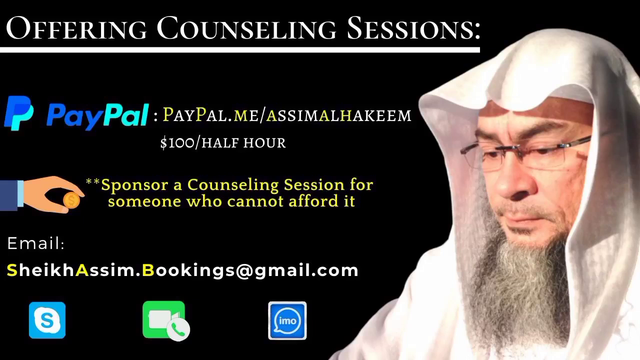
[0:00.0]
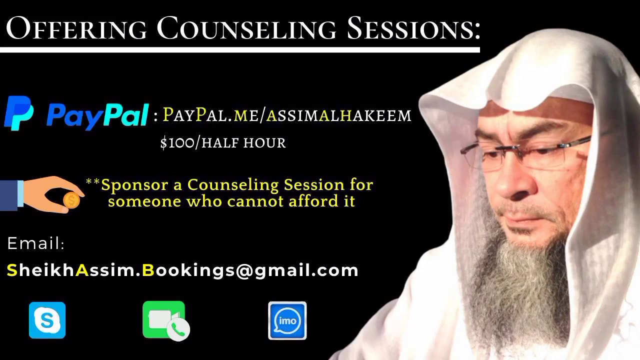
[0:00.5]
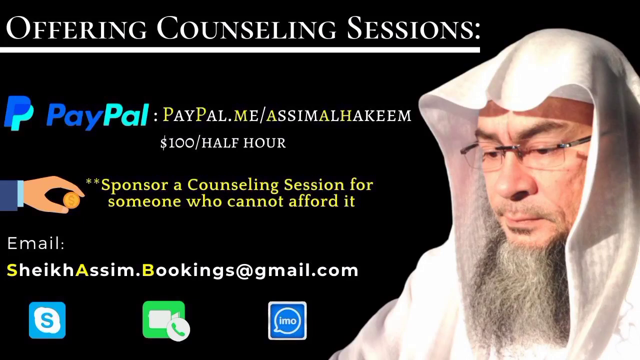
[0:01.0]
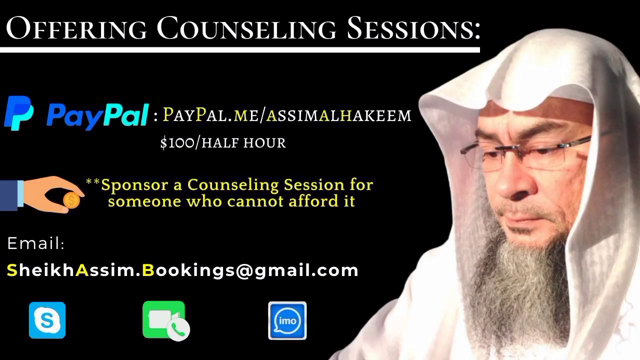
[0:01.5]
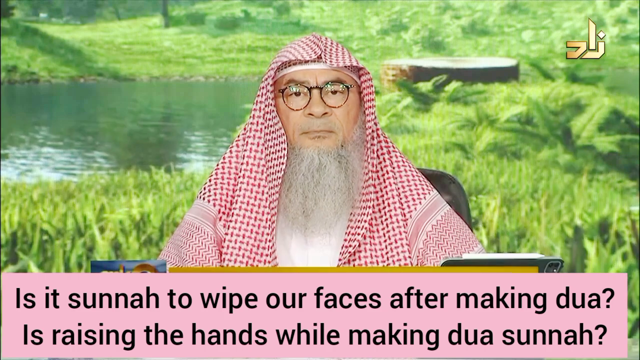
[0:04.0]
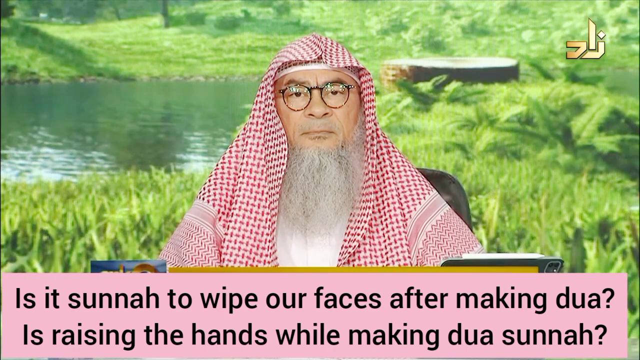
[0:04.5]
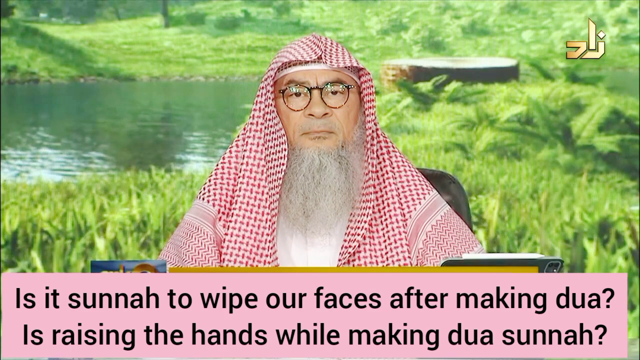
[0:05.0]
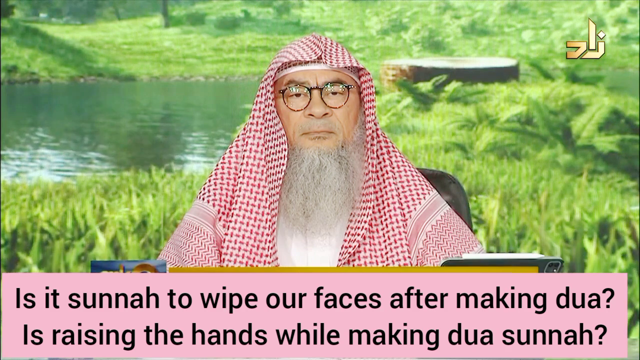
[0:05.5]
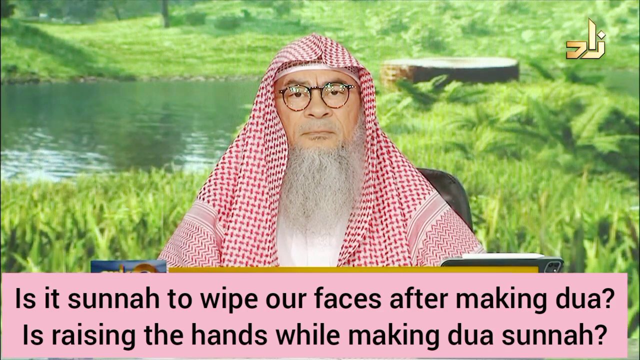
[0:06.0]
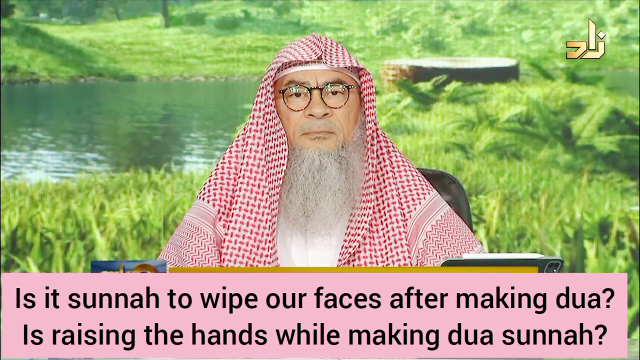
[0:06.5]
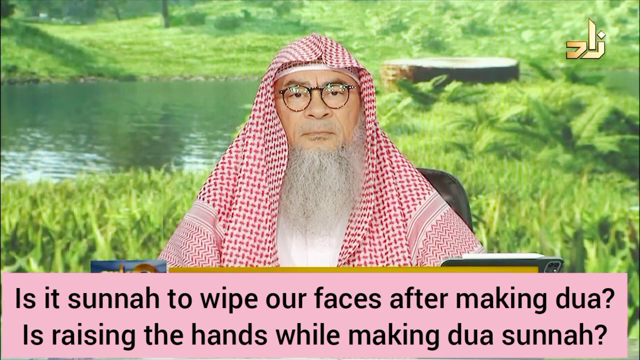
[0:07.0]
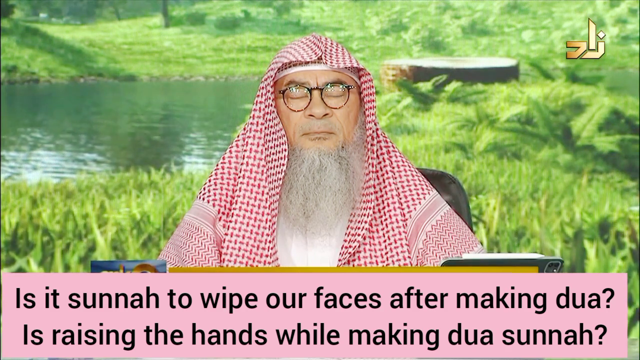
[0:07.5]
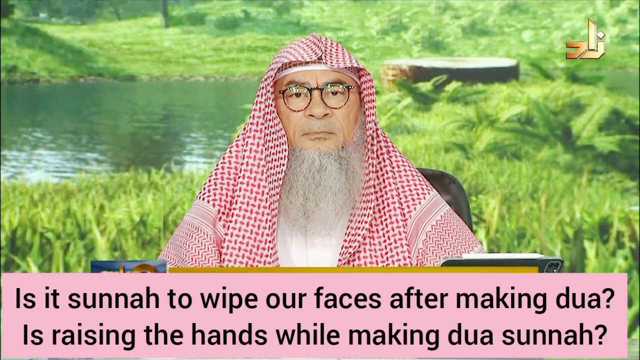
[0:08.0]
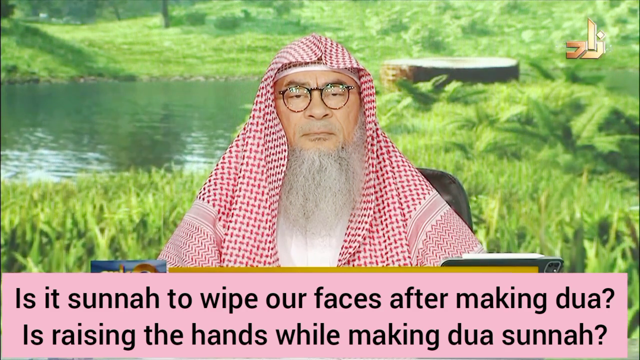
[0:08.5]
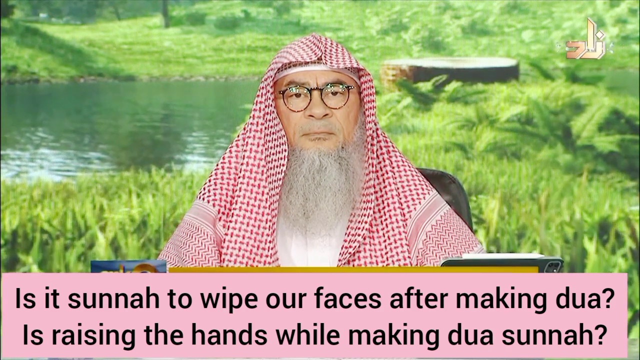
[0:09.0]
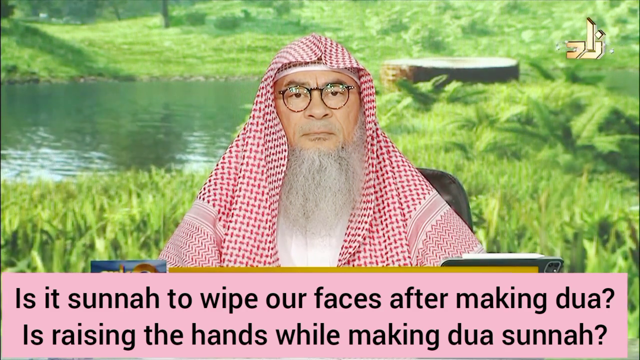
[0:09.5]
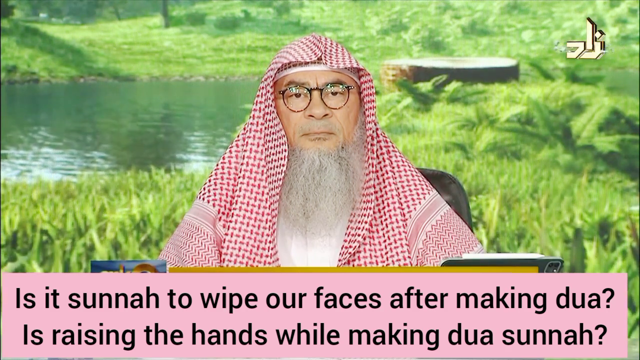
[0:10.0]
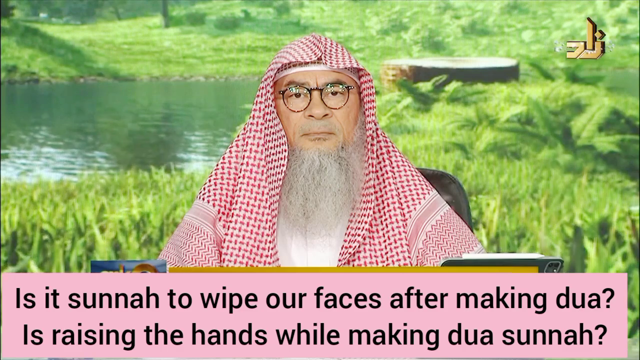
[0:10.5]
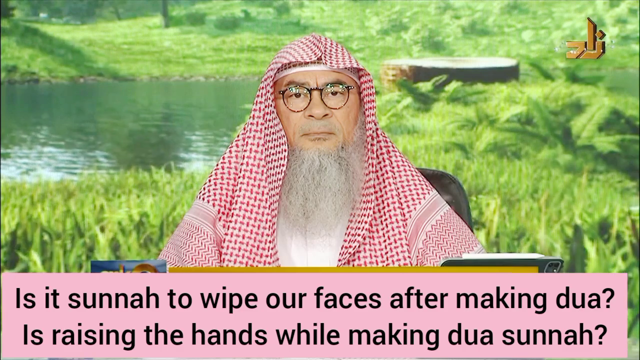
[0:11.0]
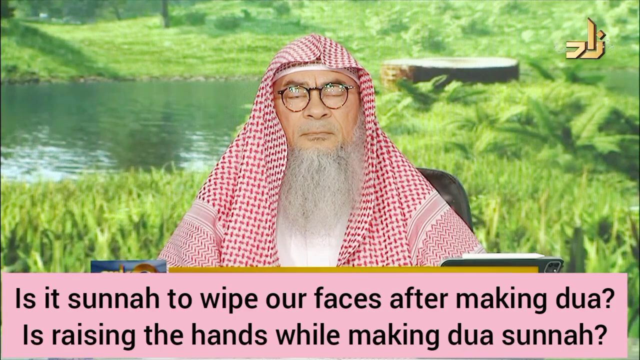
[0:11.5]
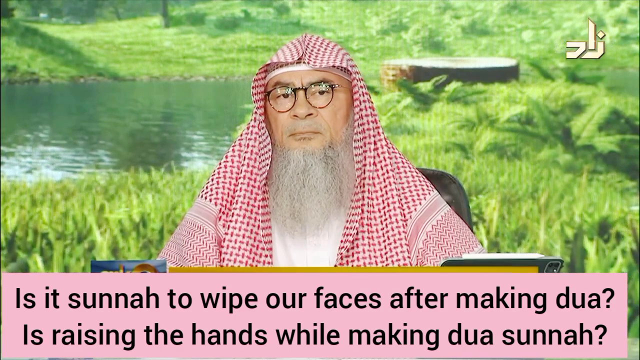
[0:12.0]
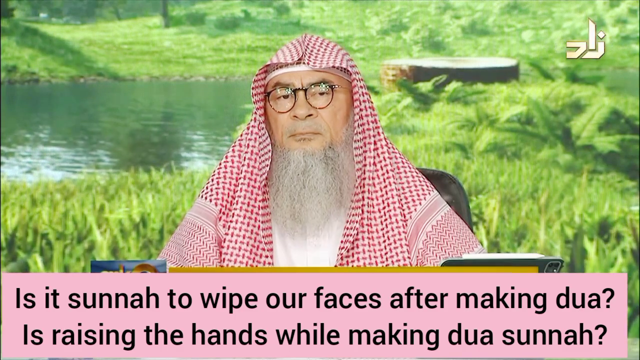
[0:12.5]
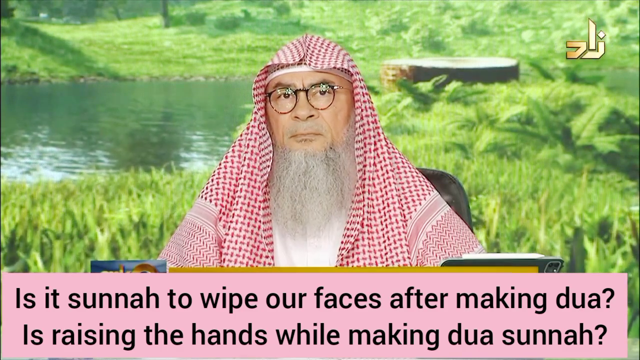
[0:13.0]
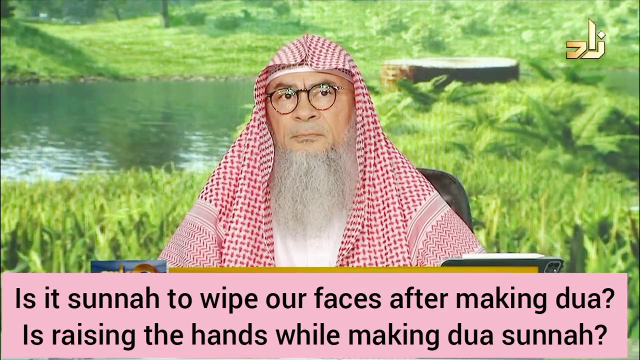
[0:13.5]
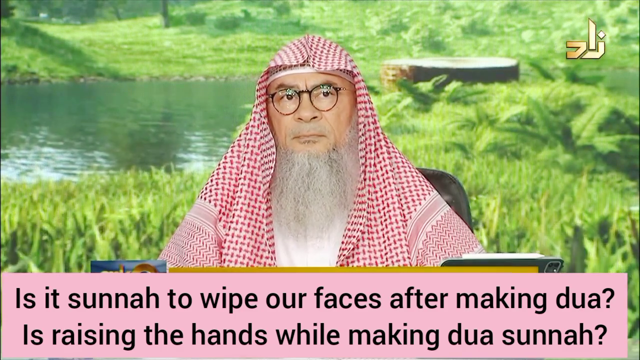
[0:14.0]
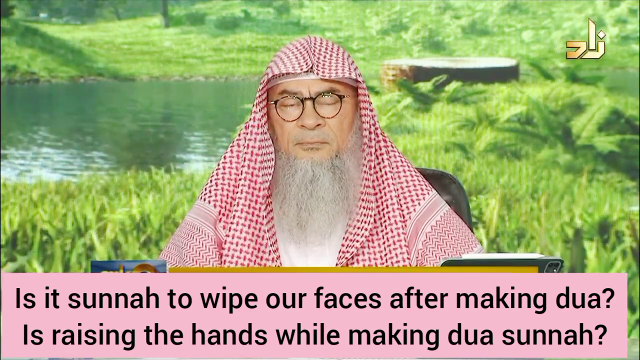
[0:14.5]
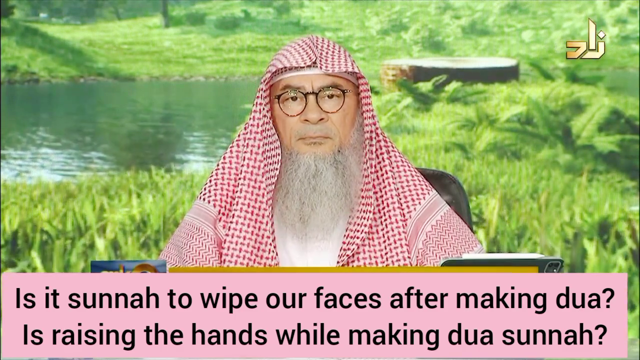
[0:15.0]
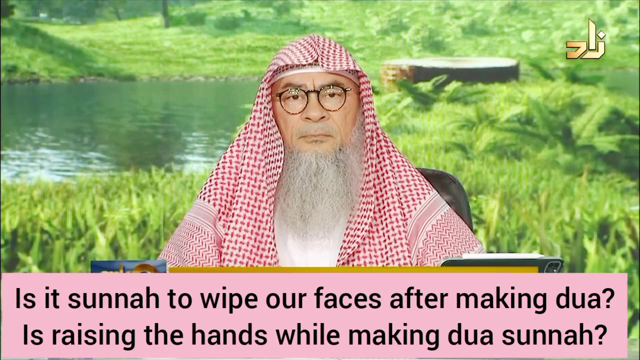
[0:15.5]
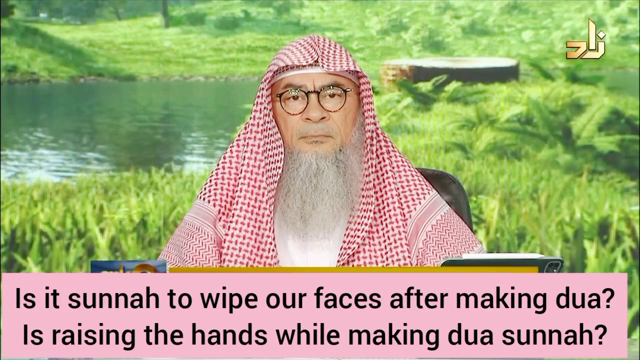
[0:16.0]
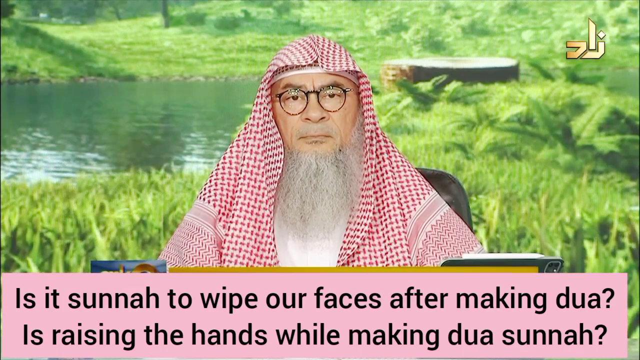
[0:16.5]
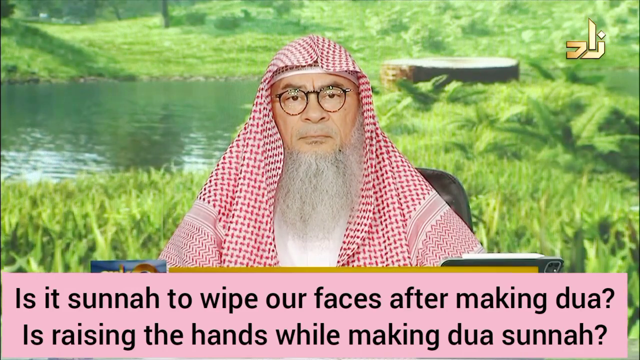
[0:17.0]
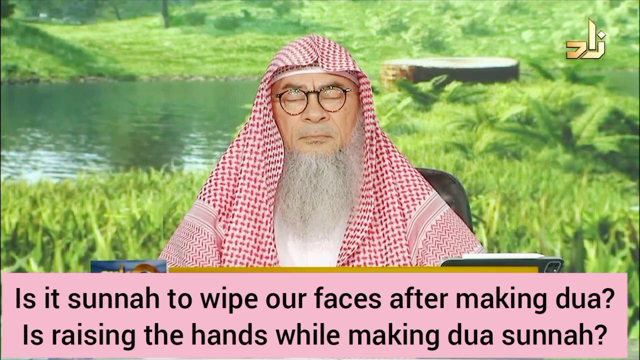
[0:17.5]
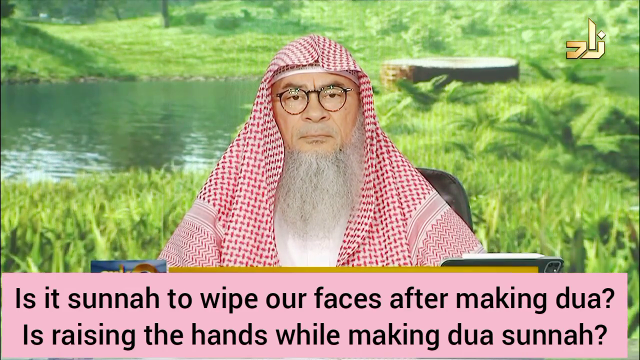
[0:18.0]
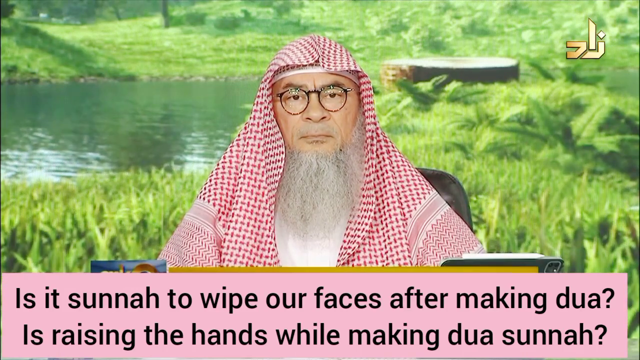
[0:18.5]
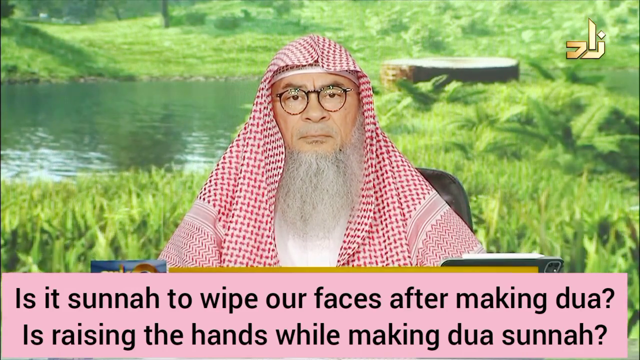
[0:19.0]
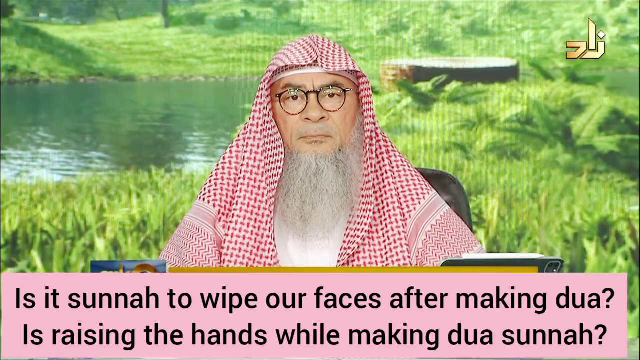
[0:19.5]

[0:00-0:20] A screen opens the video with text that reads "Offering counseling sessions $100 for a half hour." Then an older gentleman appears. He has a long gray beard with a little black in it and wears a red and white headdress. Behind him is a green screen background: on its left side there is a pond with water that is moving slightly, and on the other side there is green grass and green leaves. Text at the bottom of the screen reads "Is it sunnah to wipe our faces after making DUA?"